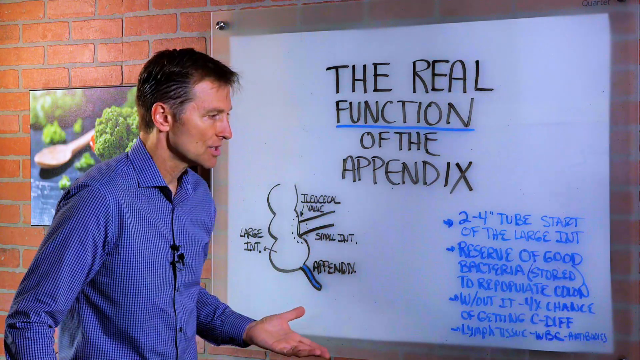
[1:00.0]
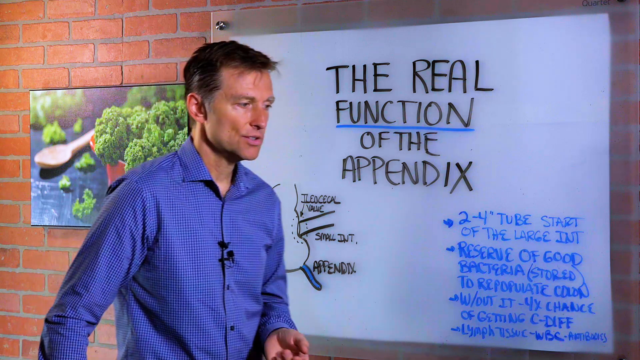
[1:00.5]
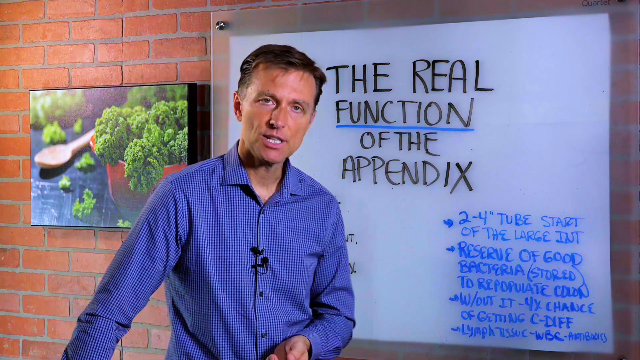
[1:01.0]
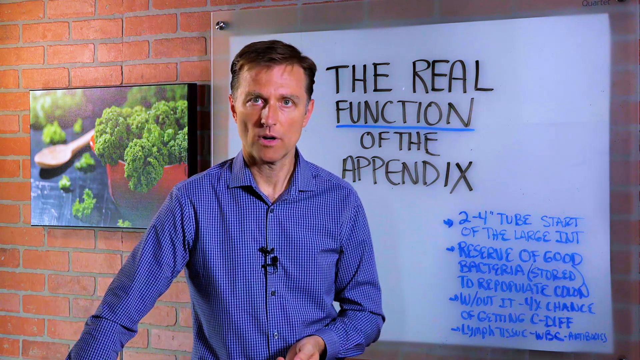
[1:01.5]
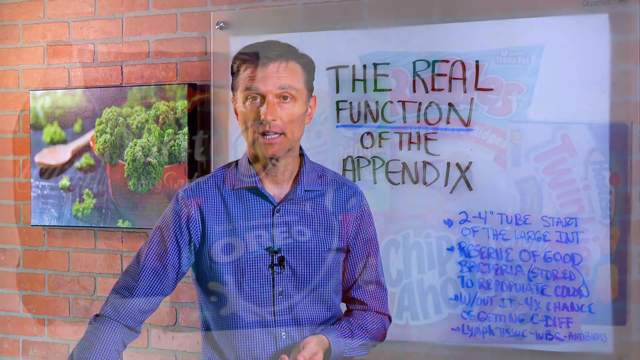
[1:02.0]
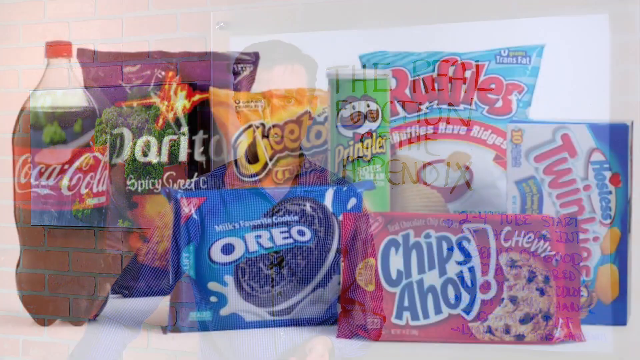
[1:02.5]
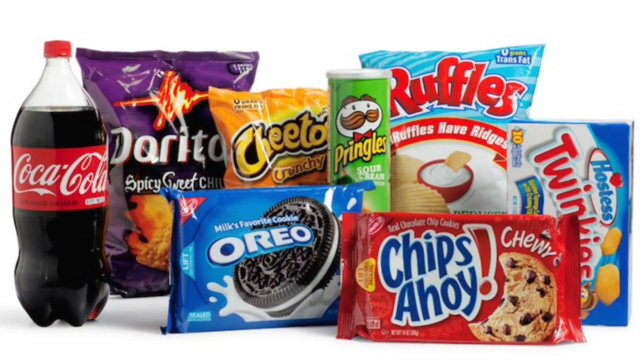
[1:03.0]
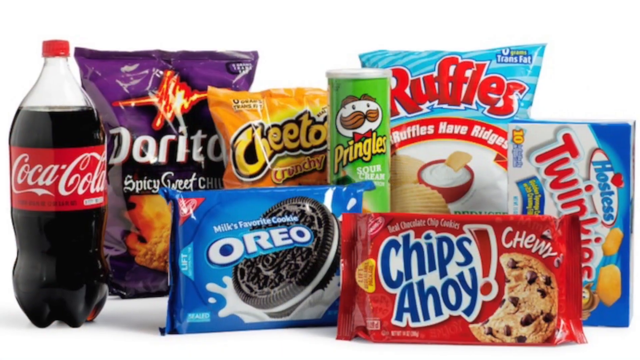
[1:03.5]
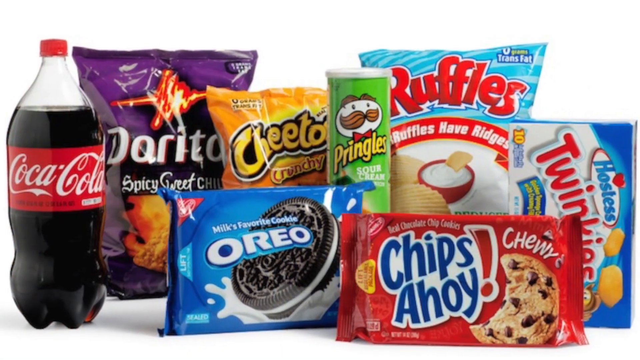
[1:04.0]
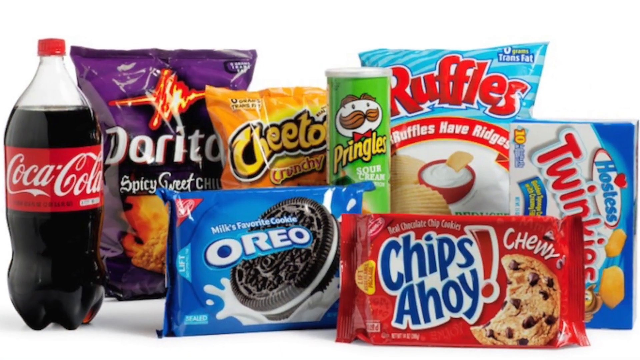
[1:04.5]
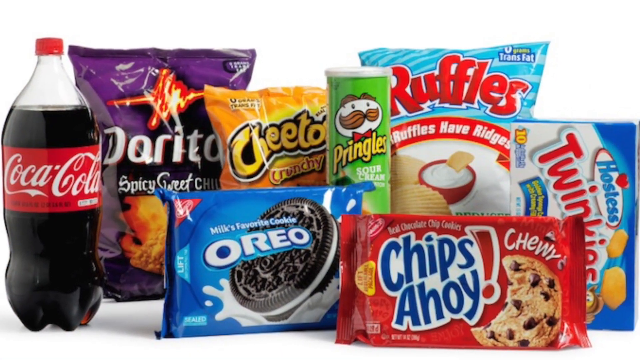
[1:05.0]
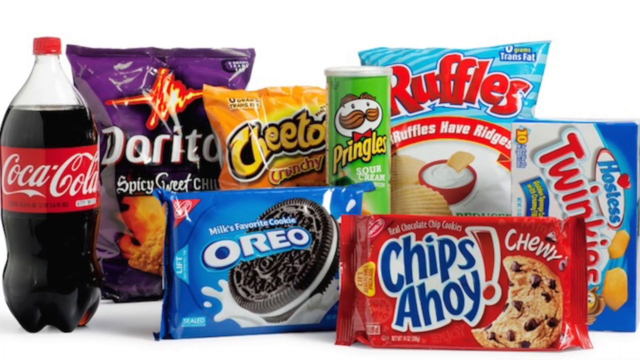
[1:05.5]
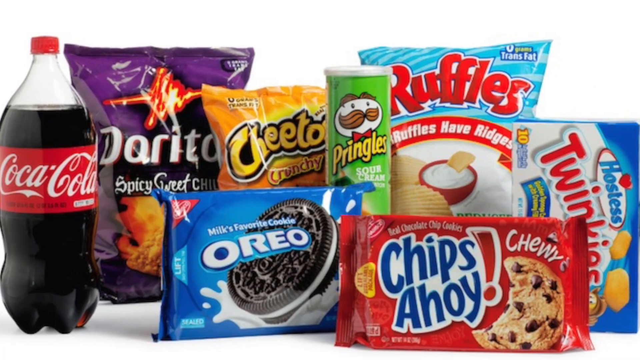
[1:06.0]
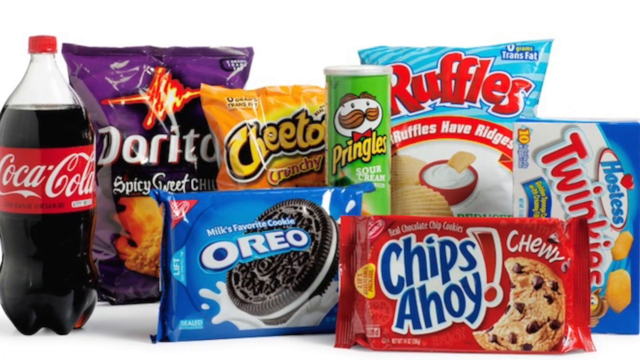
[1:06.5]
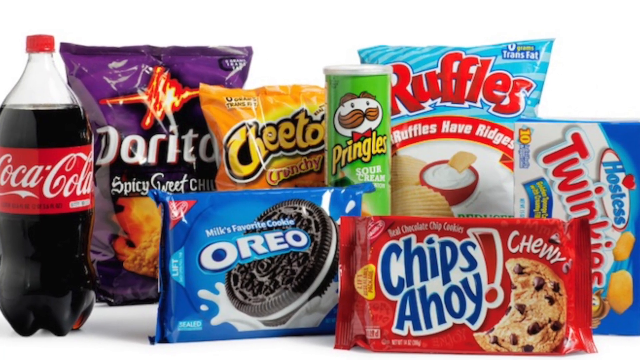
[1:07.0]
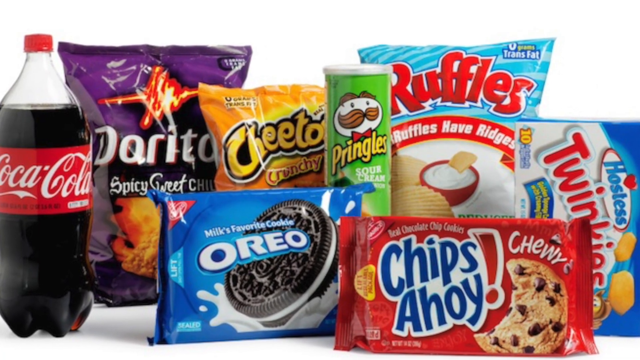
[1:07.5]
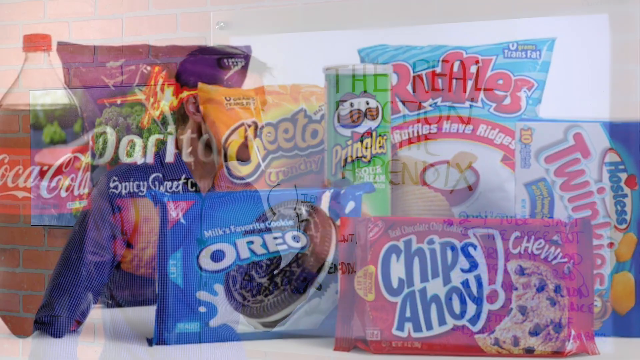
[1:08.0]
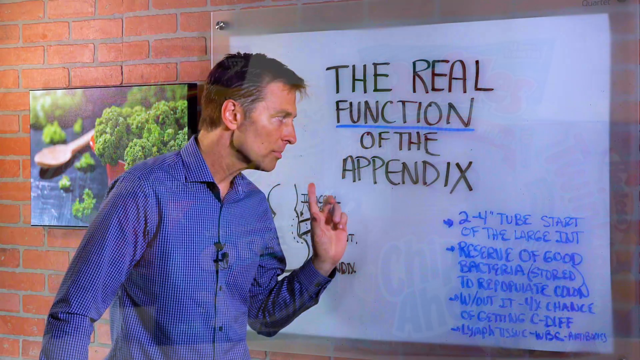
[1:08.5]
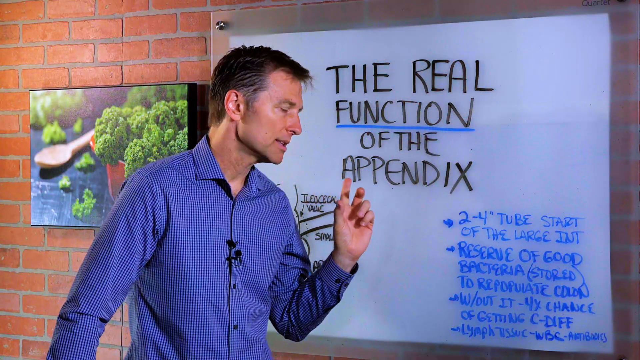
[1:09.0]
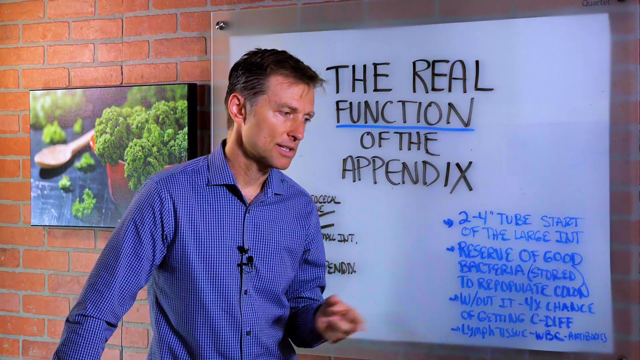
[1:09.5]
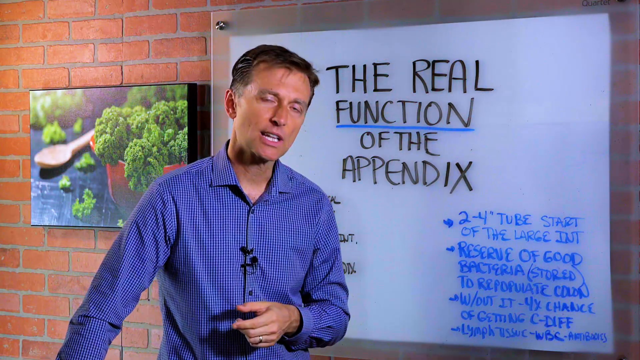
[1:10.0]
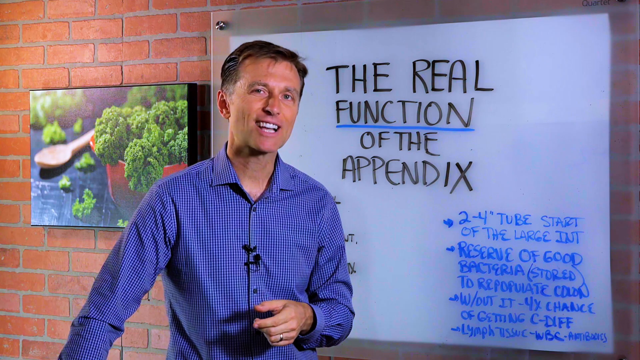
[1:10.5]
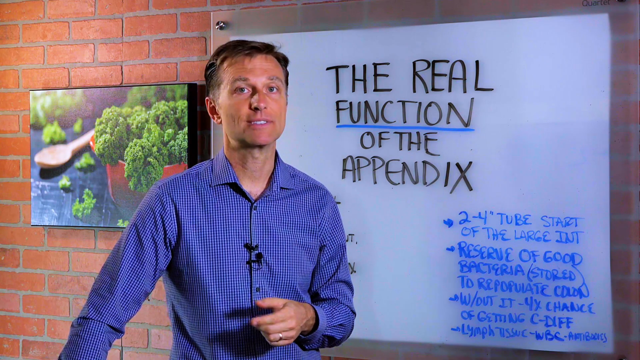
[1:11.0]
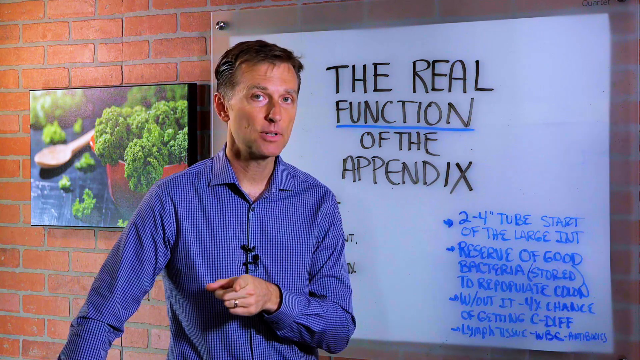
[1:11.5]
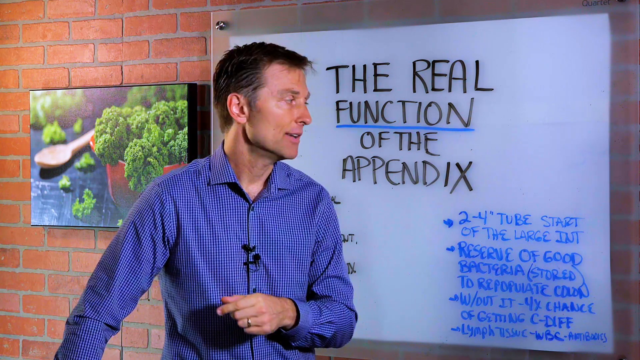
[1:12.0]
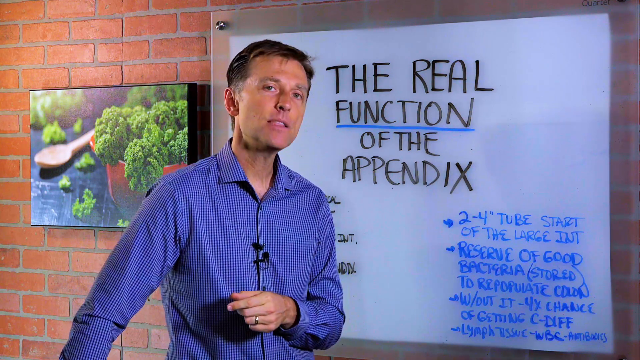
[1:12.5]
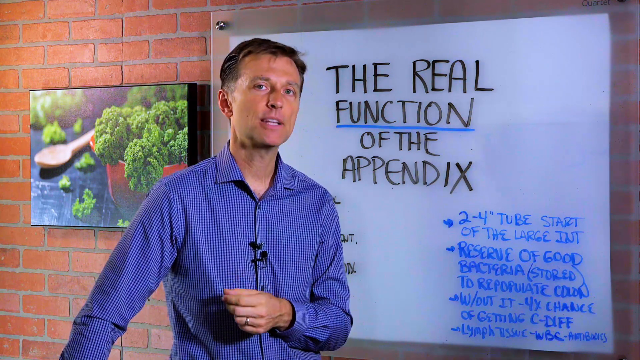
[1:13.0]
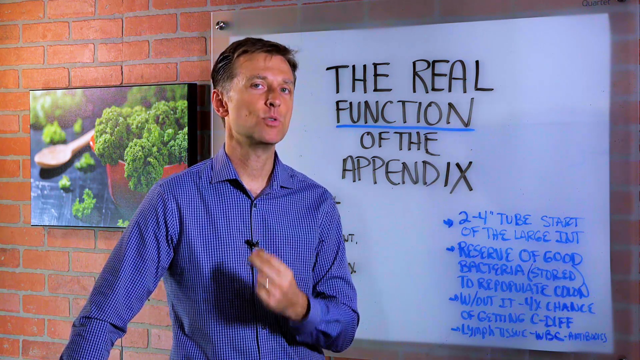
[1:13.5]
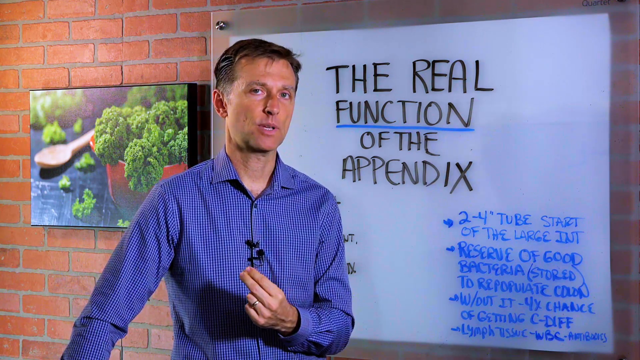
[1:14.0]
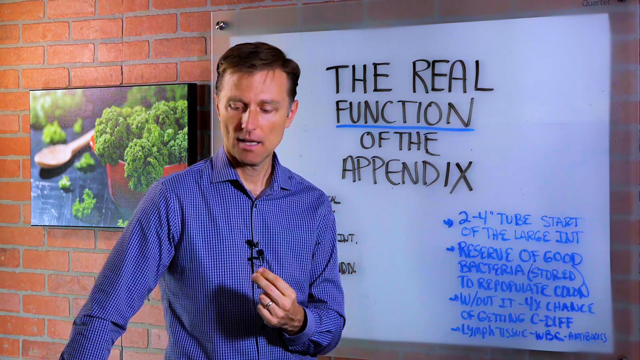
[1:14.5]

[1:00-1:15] The video cuts quickly to a spread of snacks: a bag of Ruffles, Twinkies, Pringles, Oreos, Chips Ahoy, Doritos in the sweet chili flavour rather than the regular kind, Cheetos, and a bottle of Coke. The man gestures passionately; it is unclear whether he is signalling no or yes. The painting behind him looks like an actual canvas showing a zoomed-in bowl of salad, possibly kale or broccoli, overflowing from the bowl. The bowl is red, sits on a black table, and takes up the whole right side of the picture, with a wooden spoon next to it.